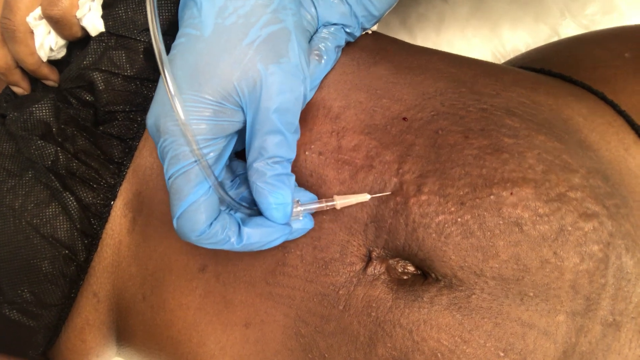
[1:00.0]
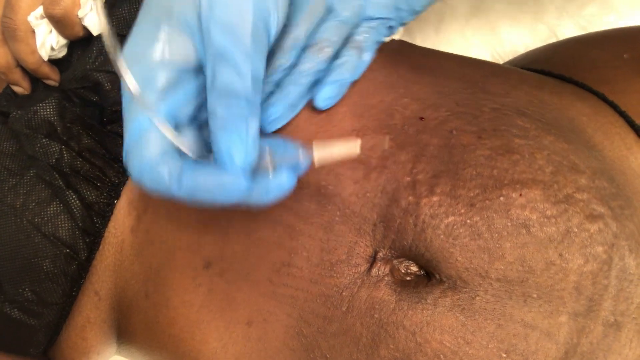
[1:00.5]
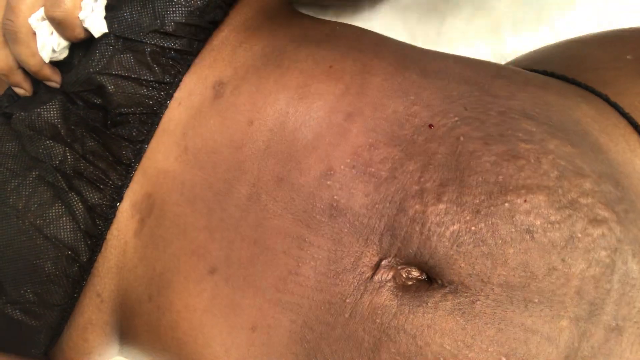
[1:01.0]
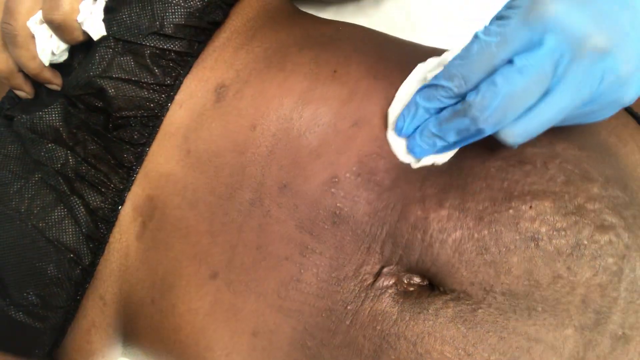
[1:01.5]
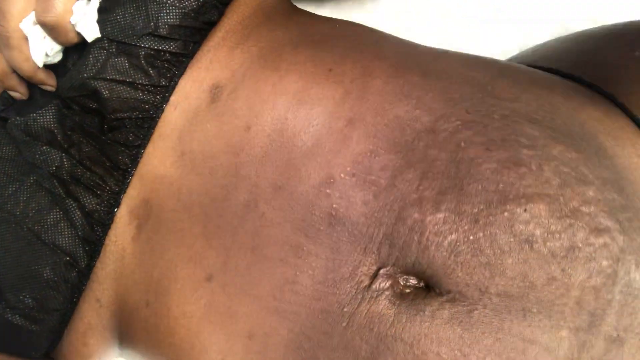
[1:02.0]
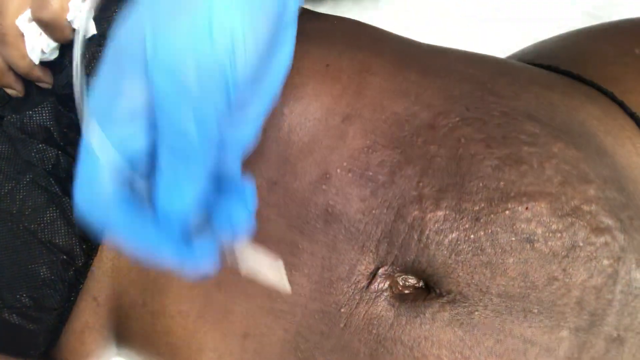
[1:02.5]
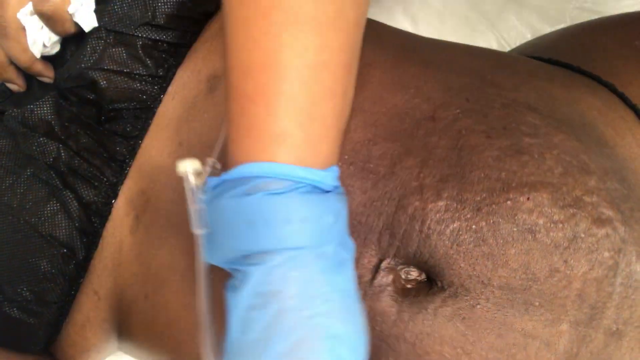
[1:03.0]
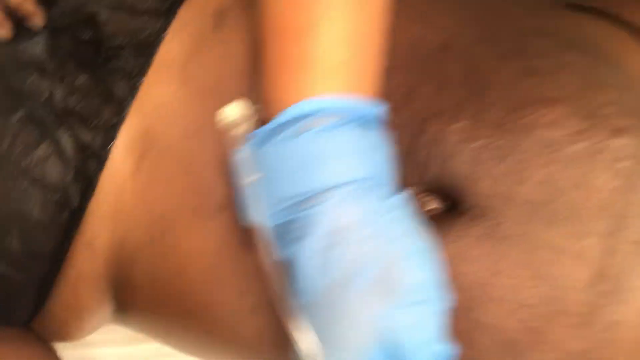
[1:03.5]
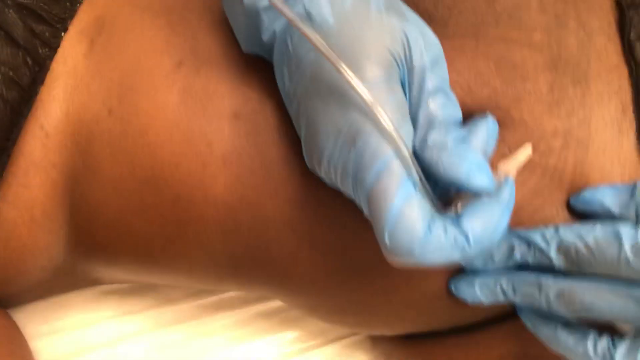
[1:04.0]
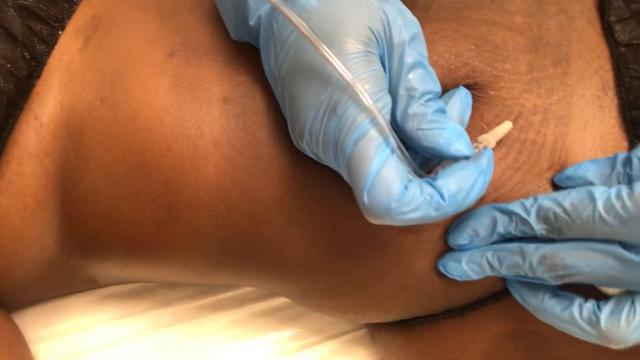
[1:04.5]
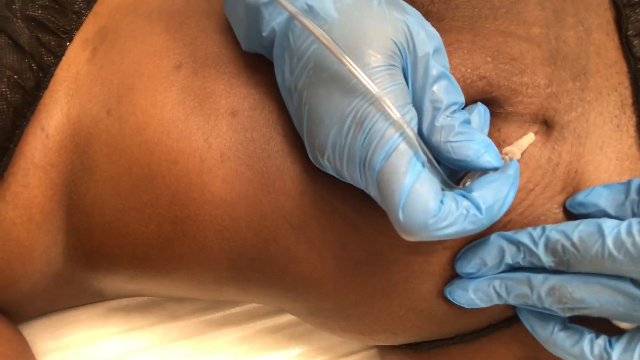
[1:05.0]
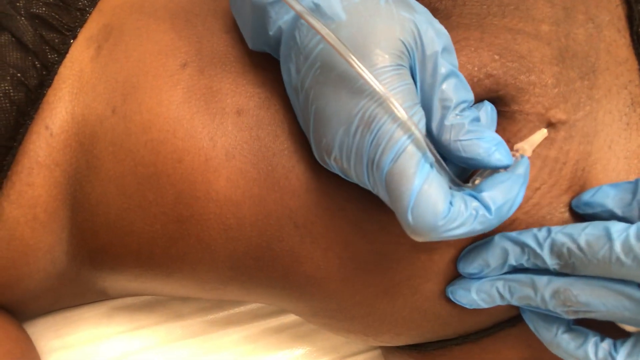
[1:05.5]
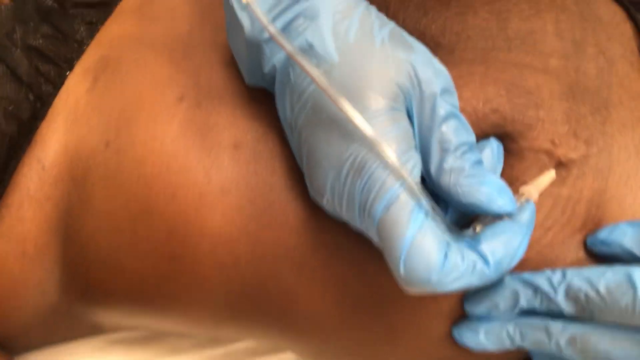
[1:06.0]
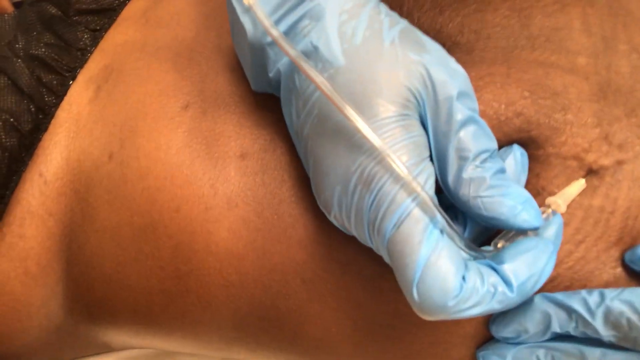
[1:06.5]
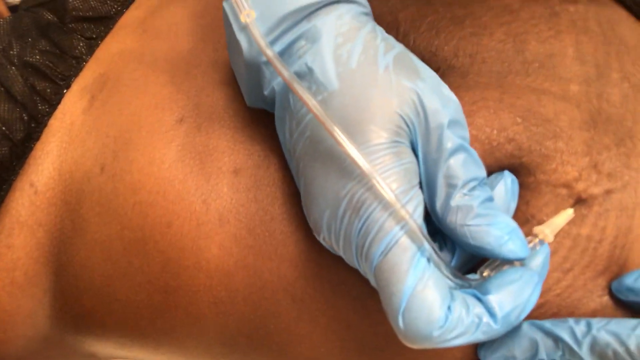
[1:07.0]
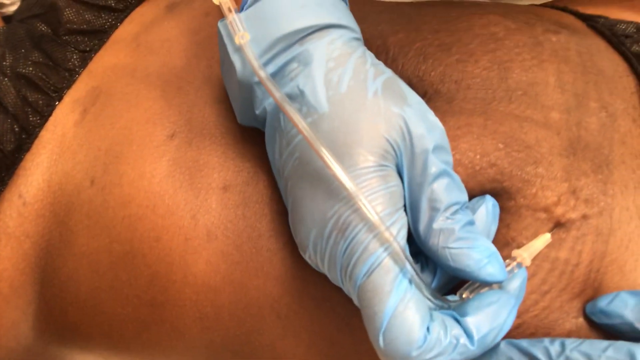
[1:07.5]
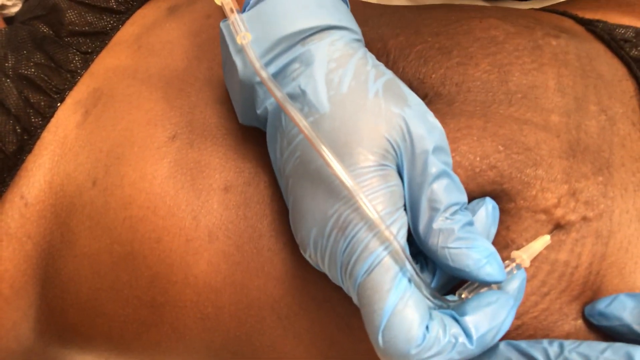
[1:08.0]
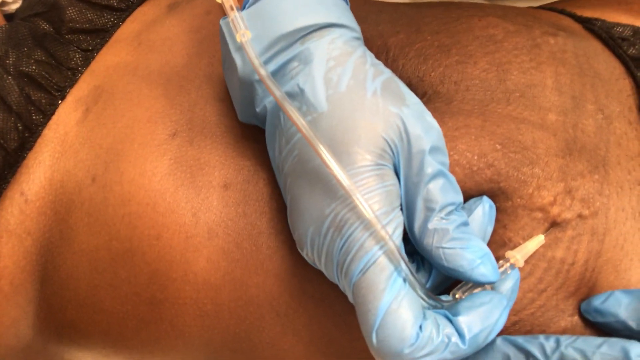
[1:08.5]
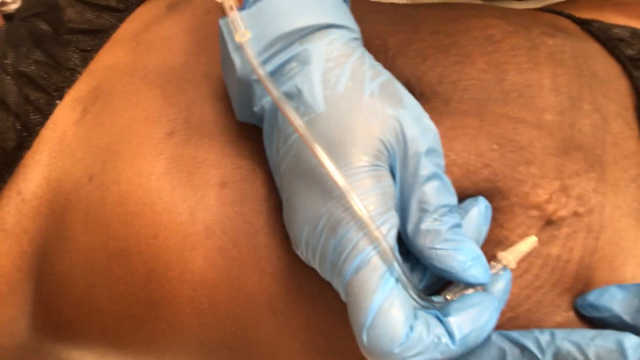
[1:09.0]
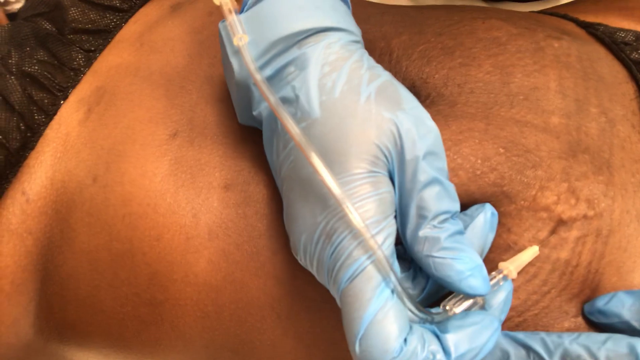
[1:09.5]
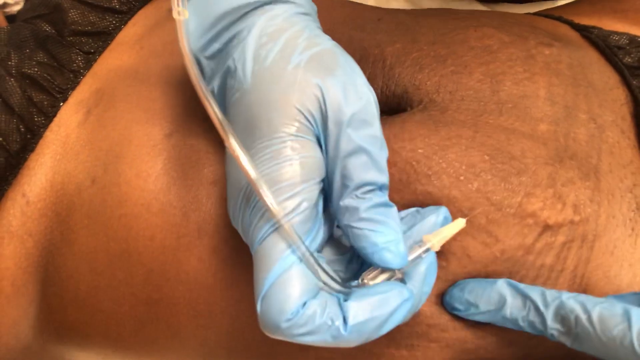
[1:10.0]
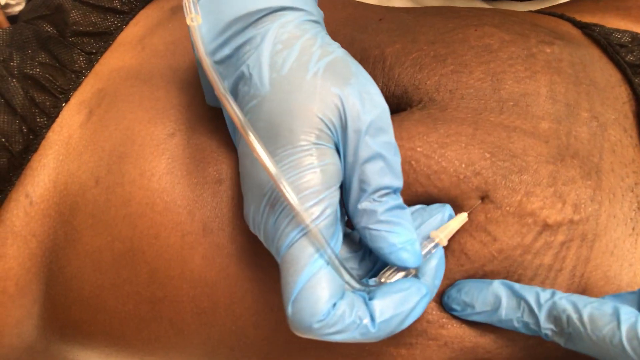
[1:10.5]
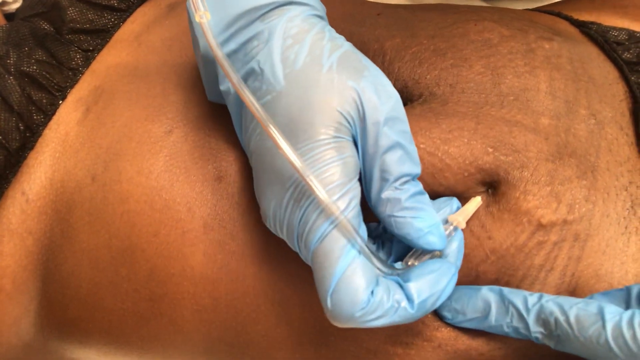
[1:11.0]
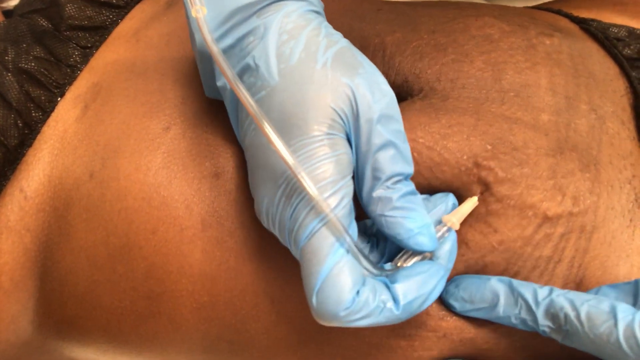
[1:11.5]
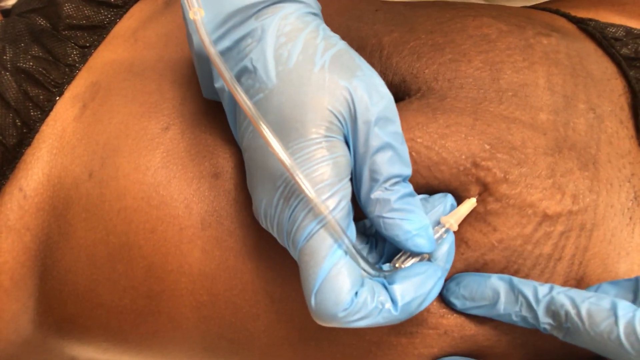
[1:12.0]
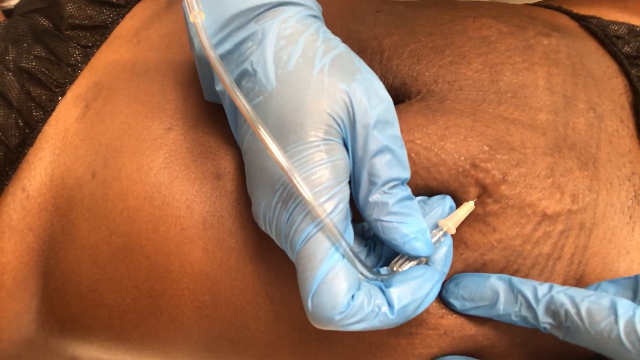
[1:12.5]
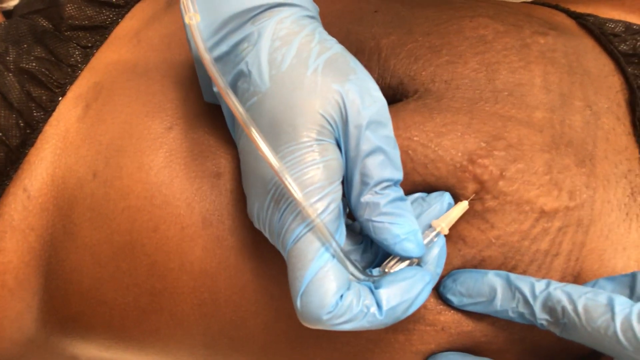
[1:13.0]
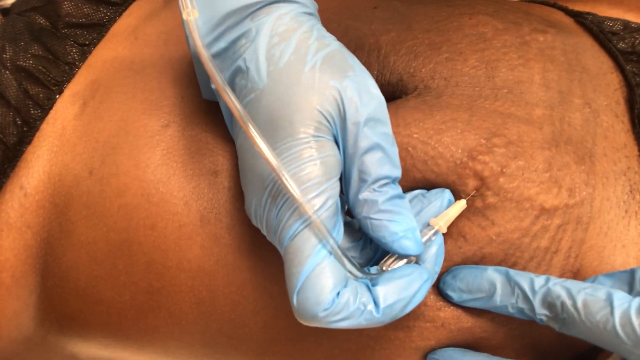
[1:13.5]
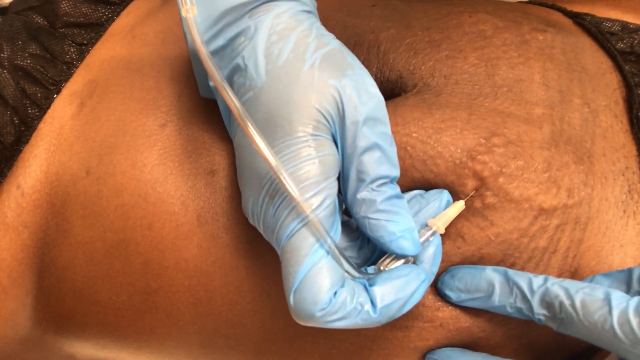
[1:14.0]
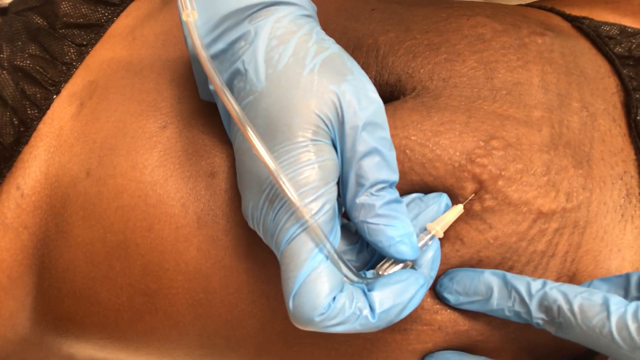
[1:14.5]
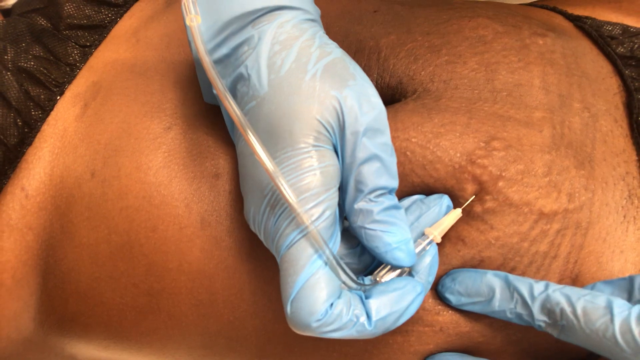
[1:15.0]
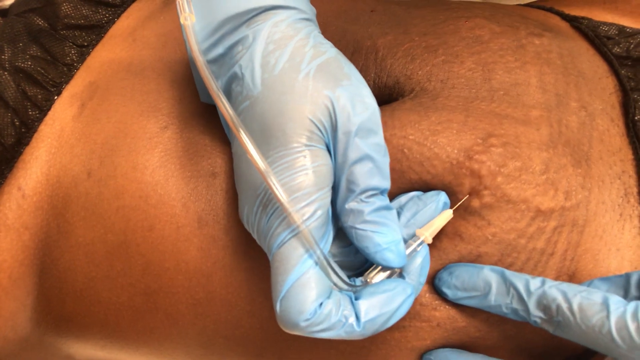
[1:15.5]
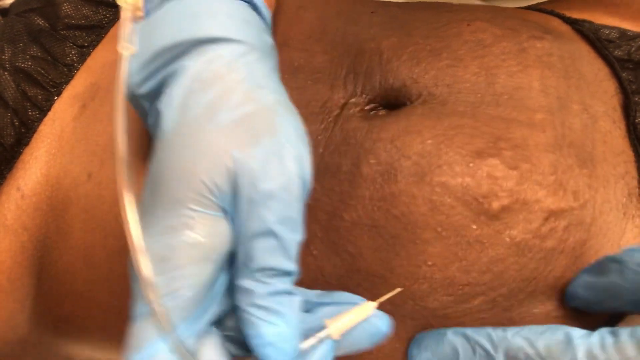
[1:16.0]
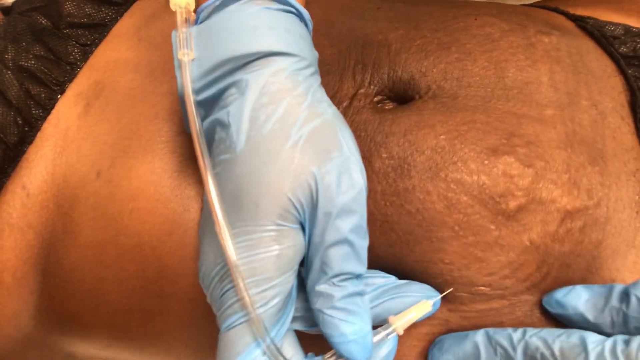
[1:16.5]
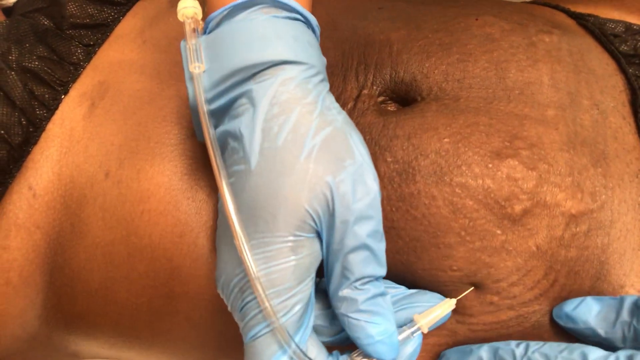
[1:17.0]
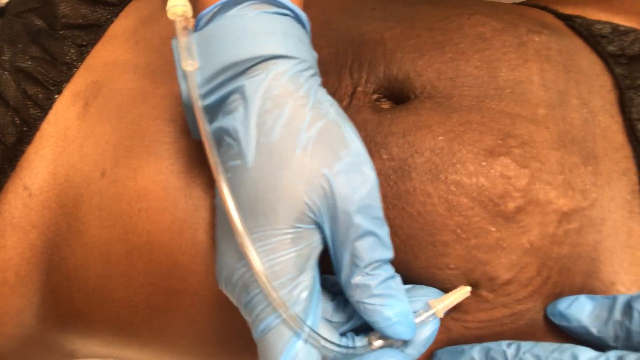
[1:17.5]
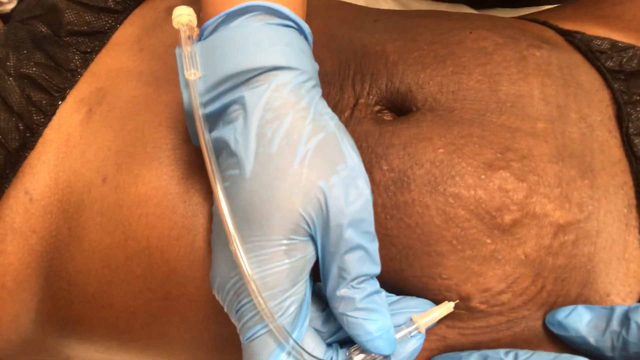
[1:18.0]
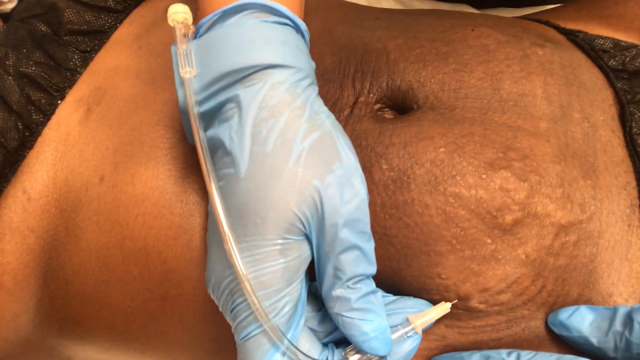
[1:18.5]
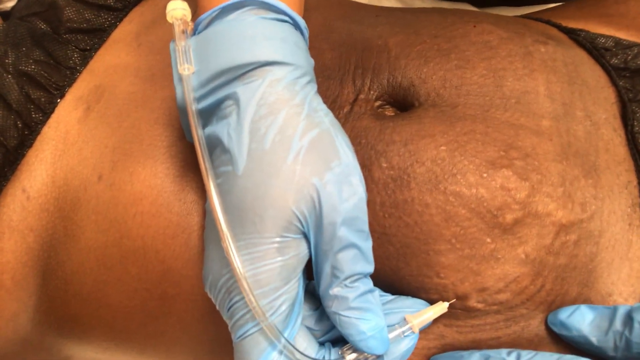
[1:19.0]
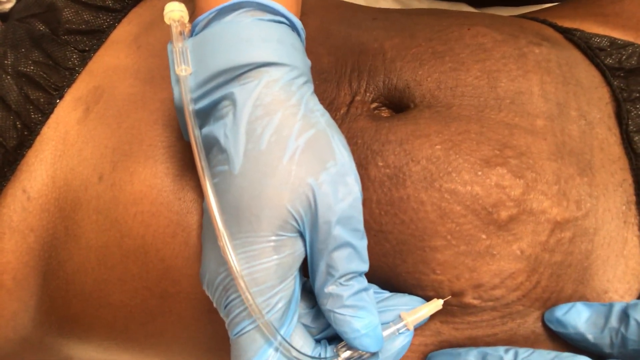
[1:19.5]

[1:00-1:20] The view focuses on the belly region of a brown-skinned patient wearing a black cloth bra resembling a patient gown and some sort of string thong-style bikini-bottom underwear straddling her thigh, who is being worked on by a surgeon of some sort wearing blue latex gloves. An individual holds a tissue up to the woman's left chest while the surgeon inserts a needle with a tube attached into various places around her stomach. The patient is stationary as the doctor removes their hands to grab their own tissue and dab up some blood that has been accumulating. The doctor then reaches across the body to target the other side of the stomach: having previously worked on the left side of the body, at the top of the frame, they now target the right side, at the bottom of the frame. As they push the needle in, they shake it slightly, either suctioning or injecting something, leaving little patches of inflamed raised skin. They stick the body about three to four times, and it seems almost as if they are injecting something, as part of the stomach close to the camera appears to fill where there is wrinkled tissue.